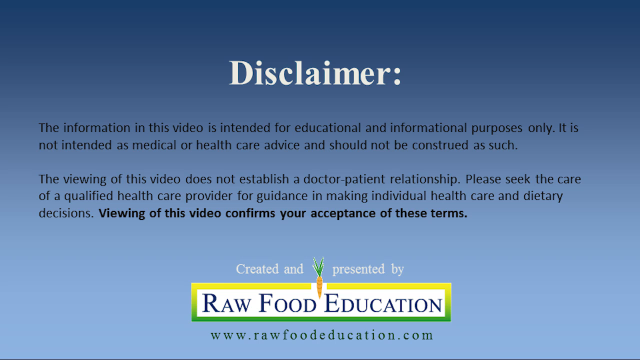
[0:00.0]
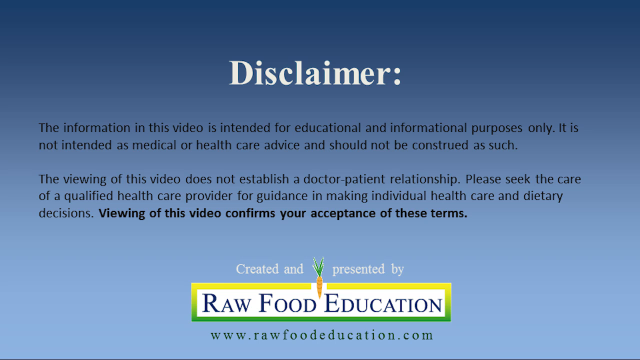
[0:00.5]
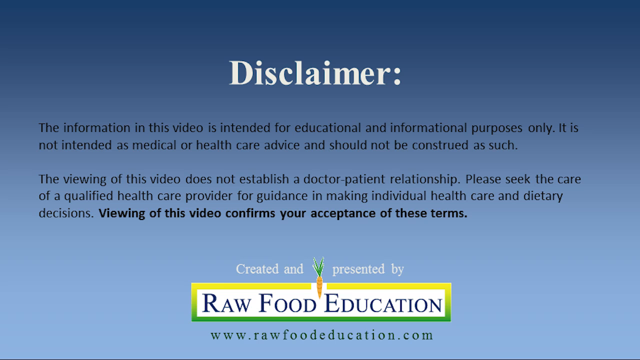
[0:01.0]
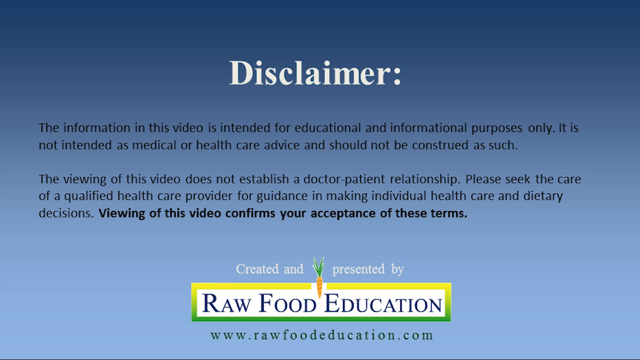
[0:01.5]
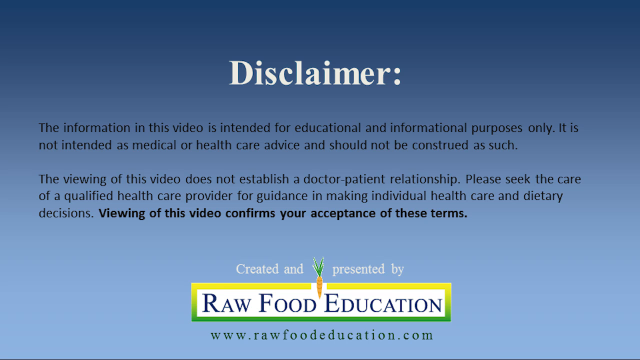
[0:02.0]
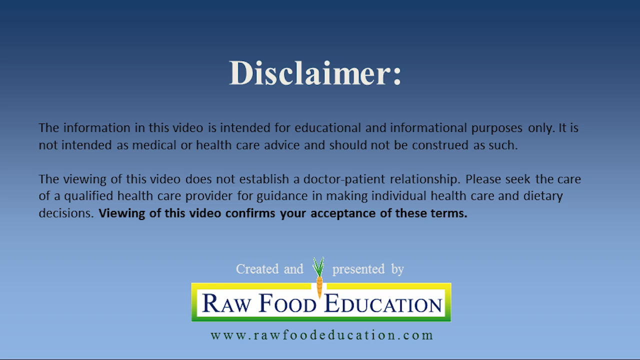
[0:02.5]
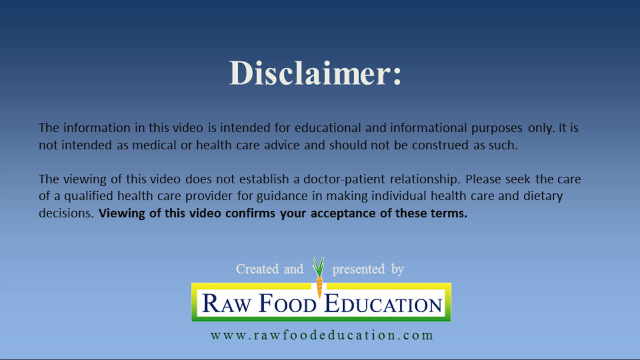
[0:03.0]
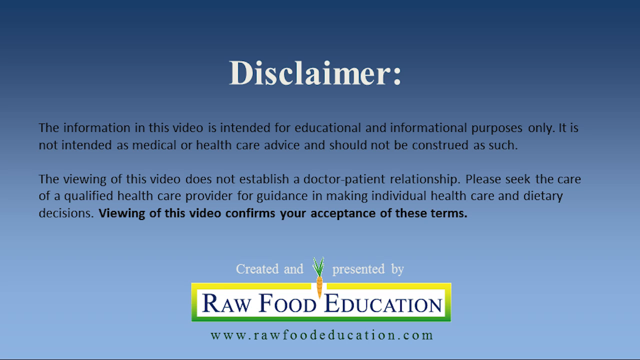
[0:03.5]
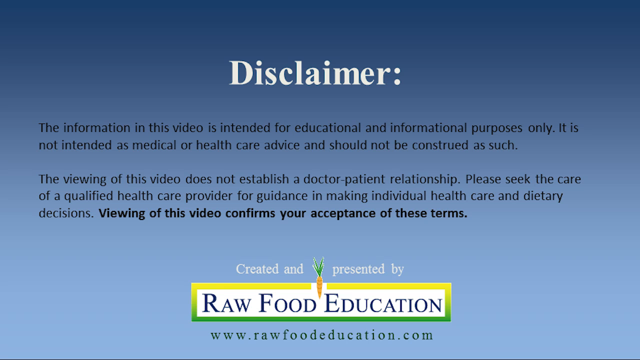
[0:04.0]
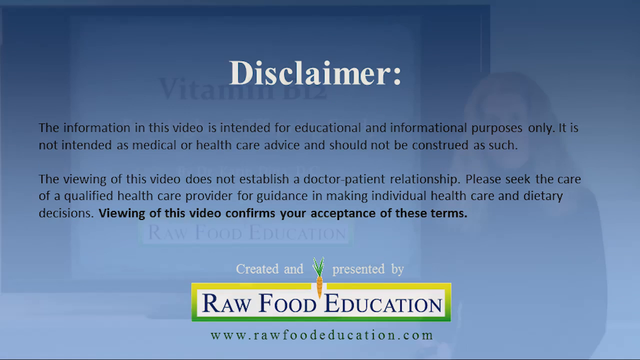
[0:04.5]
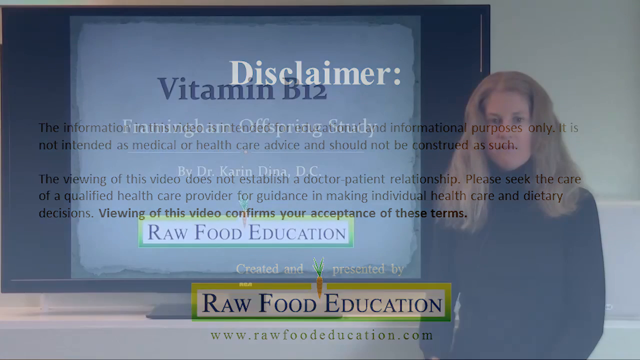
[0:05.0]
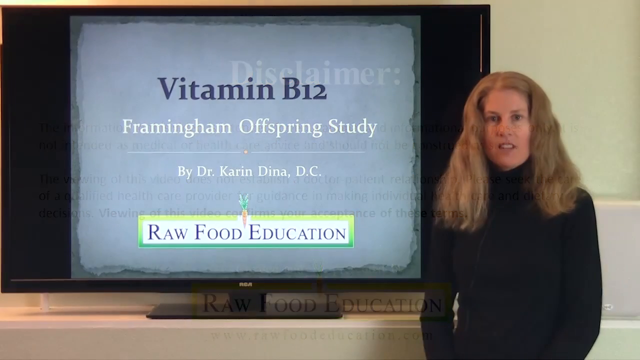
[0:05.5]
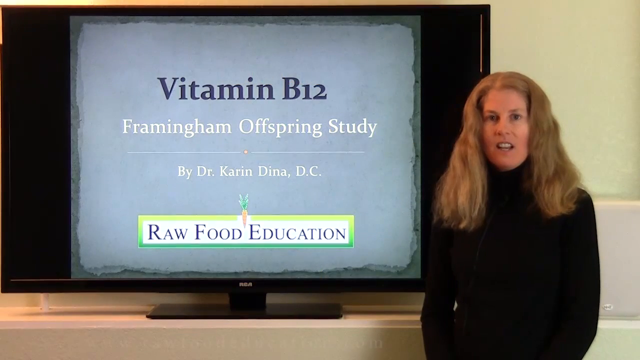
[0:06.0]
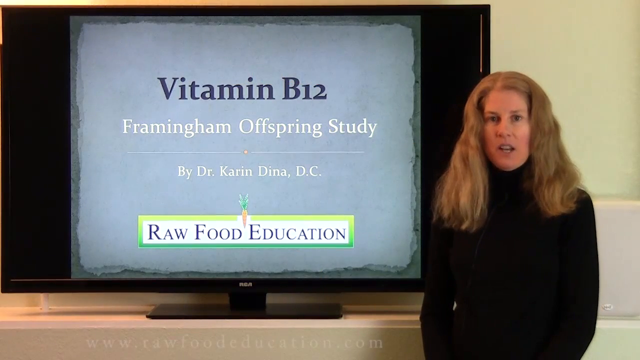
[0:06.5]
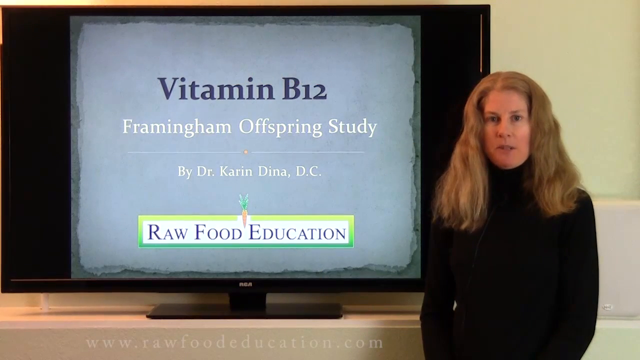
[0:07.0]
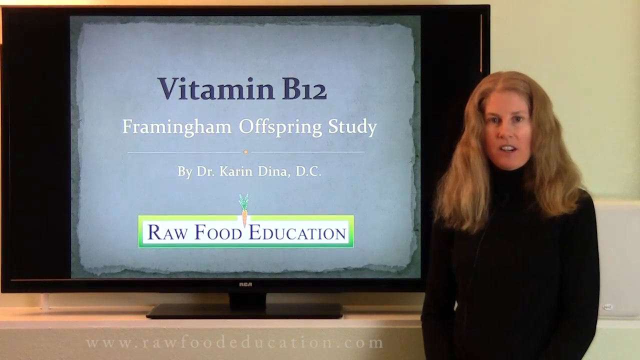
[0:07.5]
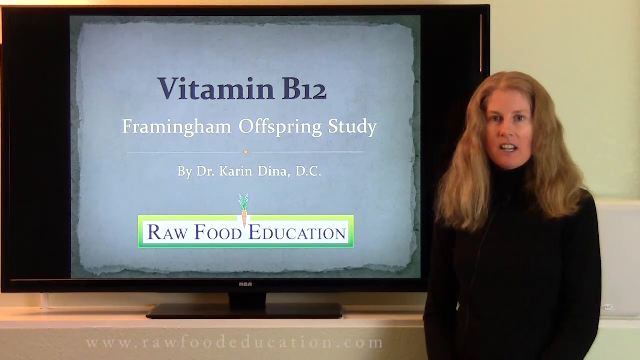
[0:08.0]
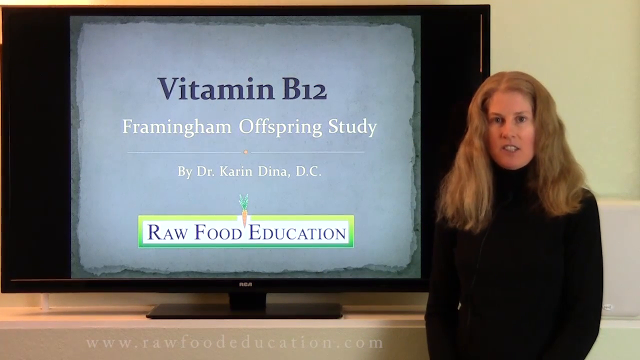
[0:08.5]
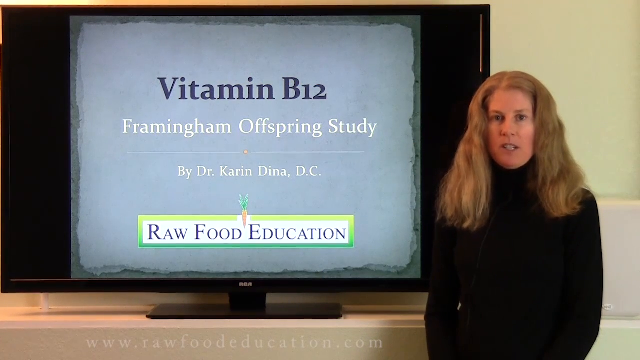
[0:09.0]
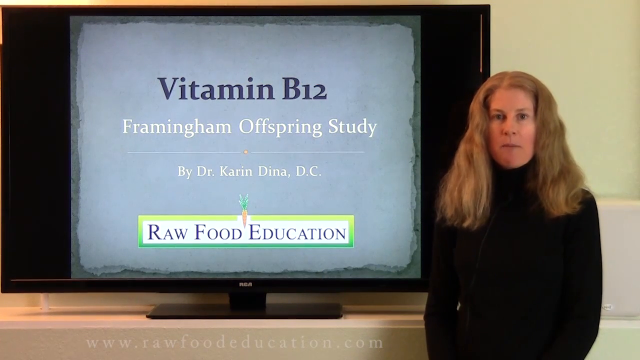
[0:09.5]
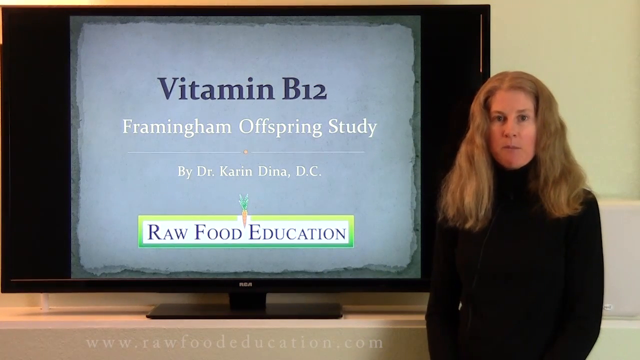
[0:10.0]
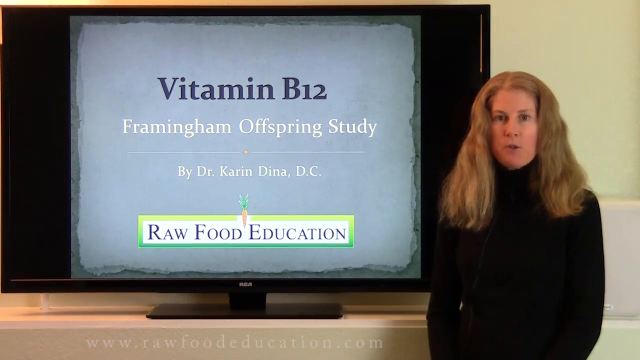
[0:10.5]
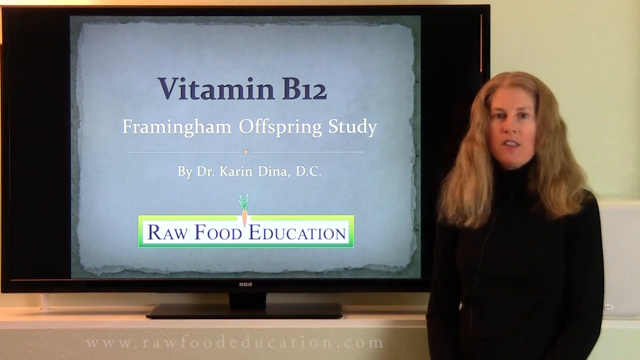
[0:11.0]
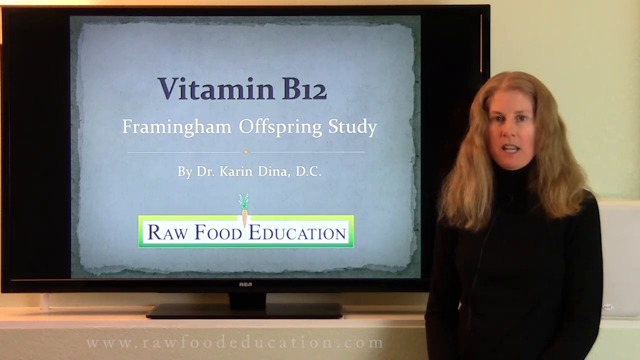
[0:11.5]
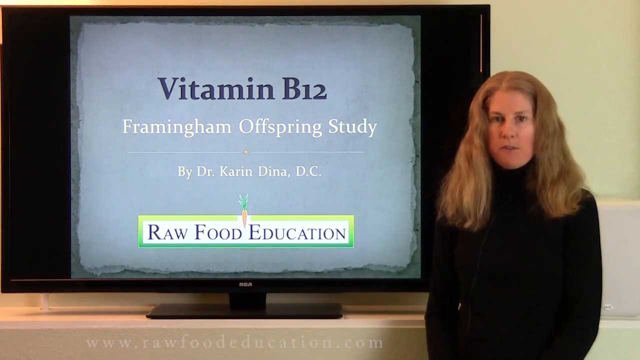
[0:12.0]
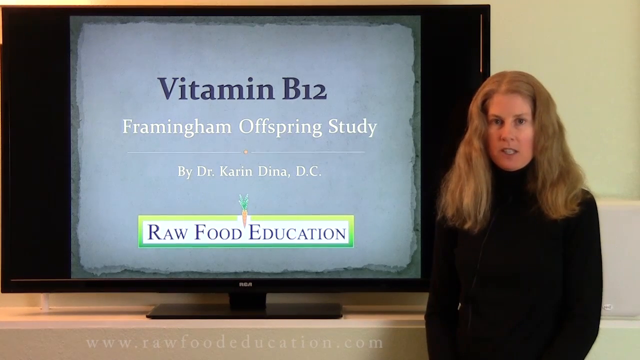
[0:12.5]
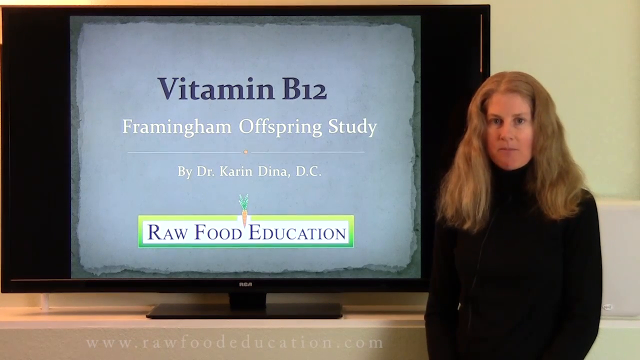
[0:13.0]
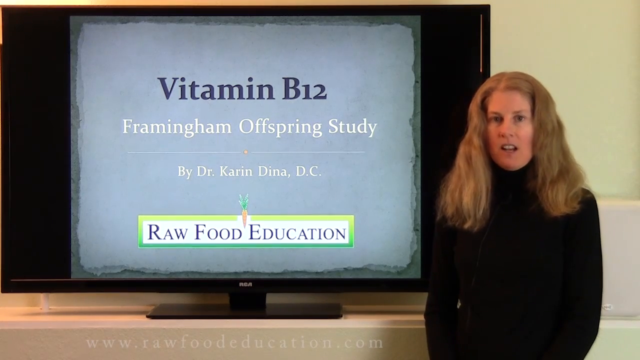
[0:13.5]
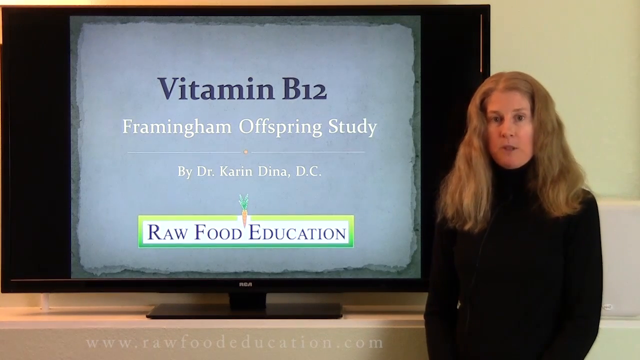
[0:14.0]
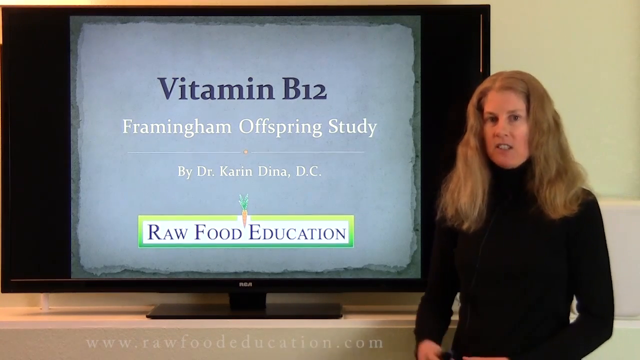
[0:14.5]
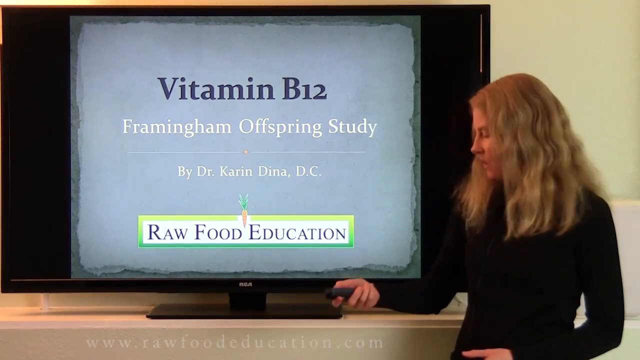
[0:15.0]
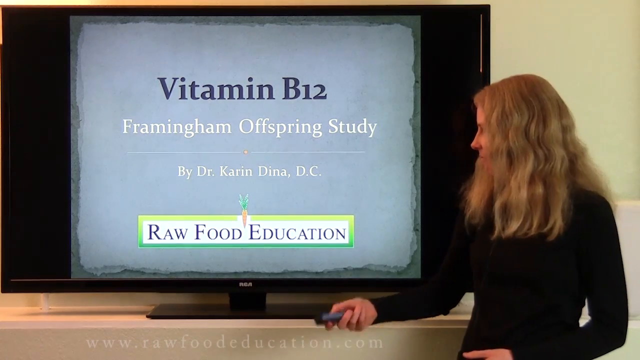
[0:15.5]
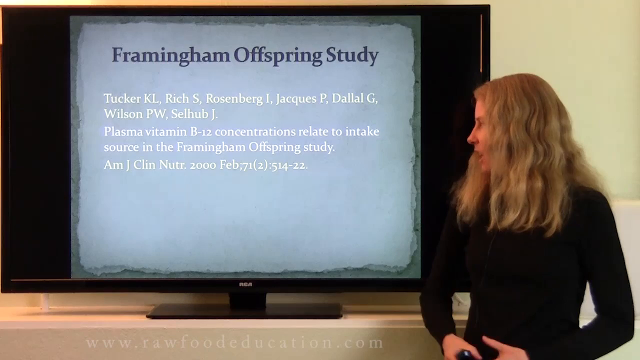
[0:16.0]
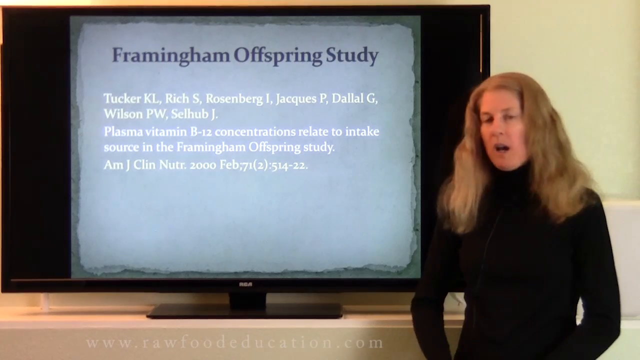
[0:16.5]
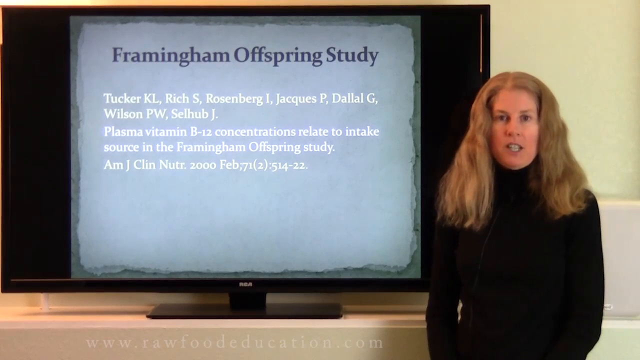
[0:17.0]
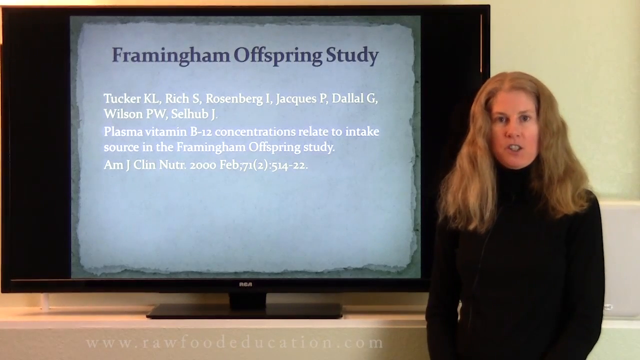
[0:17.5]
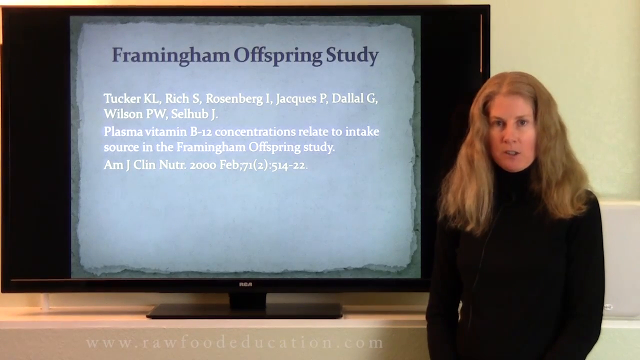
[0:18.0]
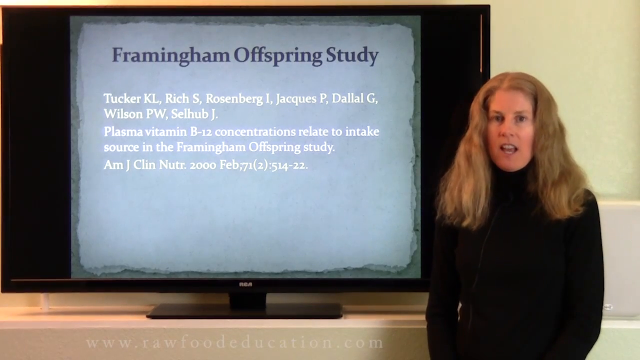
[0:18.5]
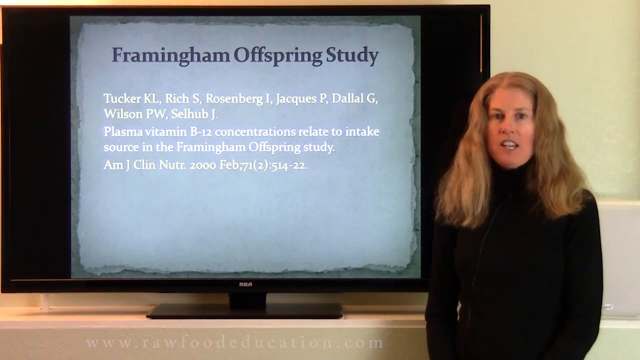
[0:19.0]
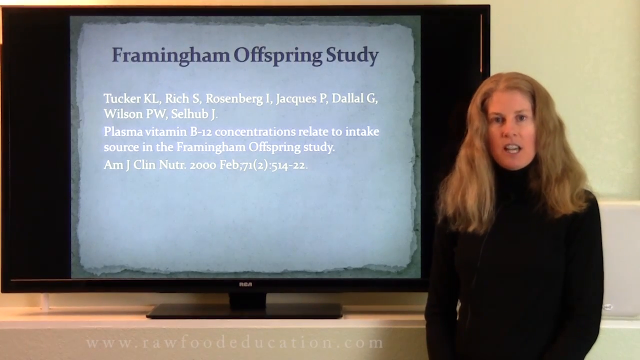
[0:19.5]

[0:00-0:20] A blue background displays text reading "disclaimer. This information in this video is intended for educational and informational purposes only. It is not intended as medical or healthcare advice and should not be considered as such. The viewing of this video does not establish a doctor-patient relationship. Please seek the care of a qualified healthcare provider for guidance in making individual healthcare and dietary decisions. Viewing of this video confirms your acceptance of these terms. Created and presented by Raw Foods Education." A URL, "www.rawfoodeducation.com", appears at the bottom of the page. The page then transitions to text on a kind of large monitor reading "Vitamin B12, Framingham Offspring Study by Dr. Karen Diana, D.C. Raw Foods Education." A woman, probably around 40, with kind of medium-length dirty blonde hair and a black sweater, then appears, talking toward the camera.